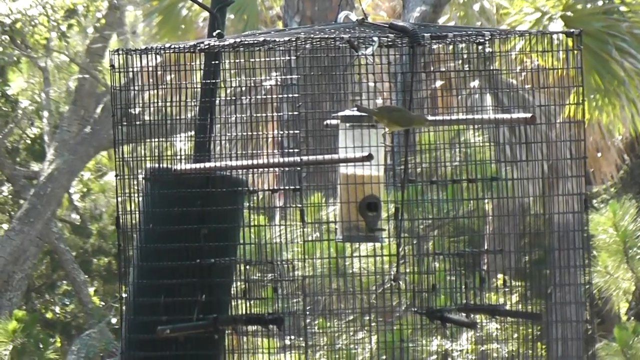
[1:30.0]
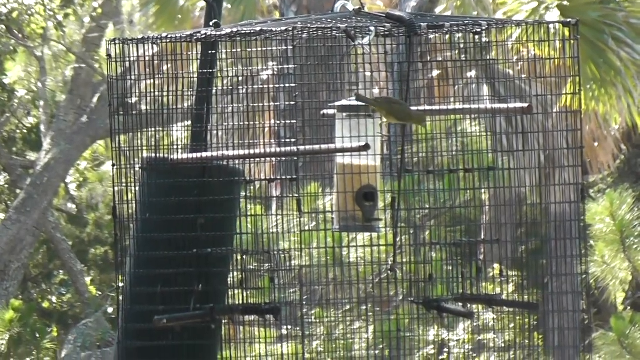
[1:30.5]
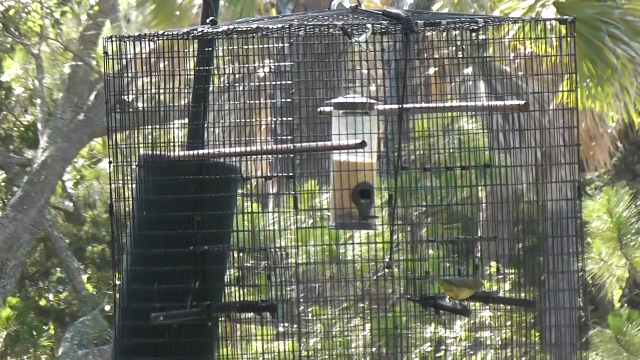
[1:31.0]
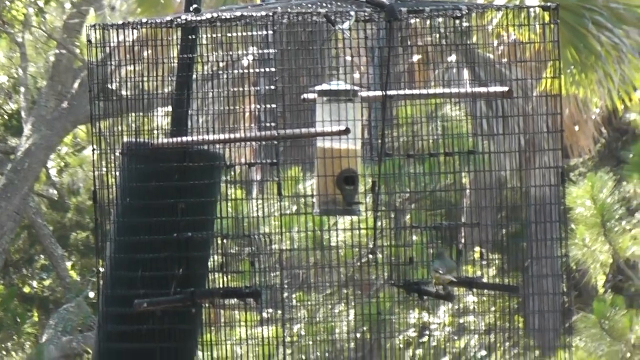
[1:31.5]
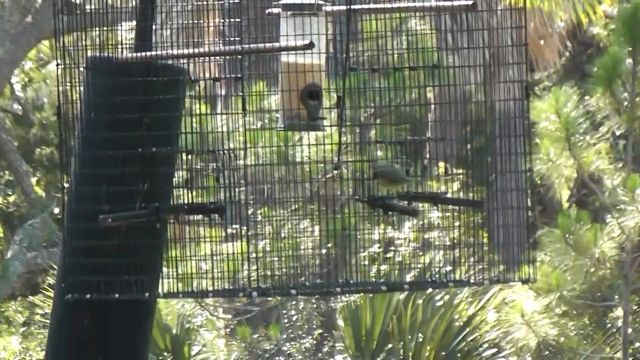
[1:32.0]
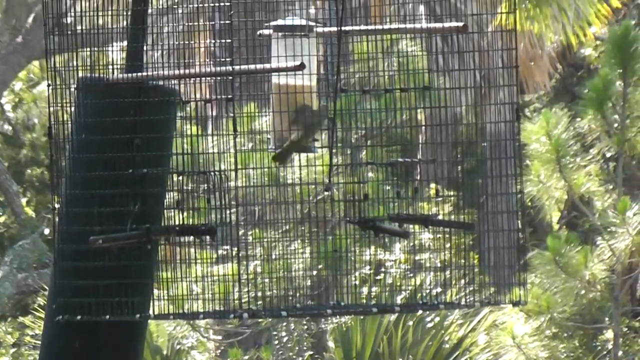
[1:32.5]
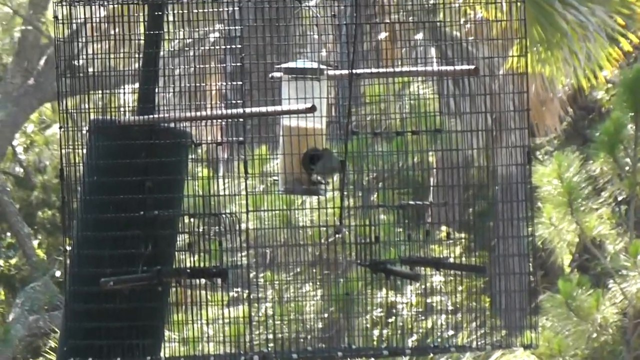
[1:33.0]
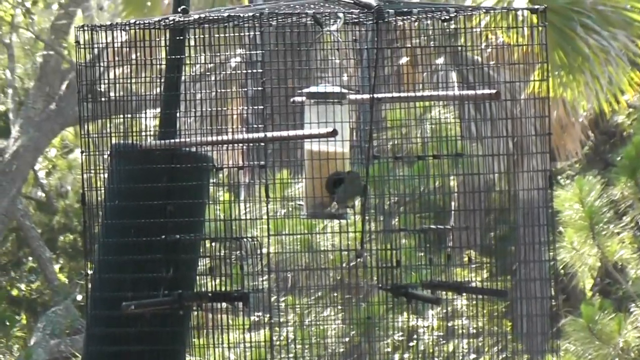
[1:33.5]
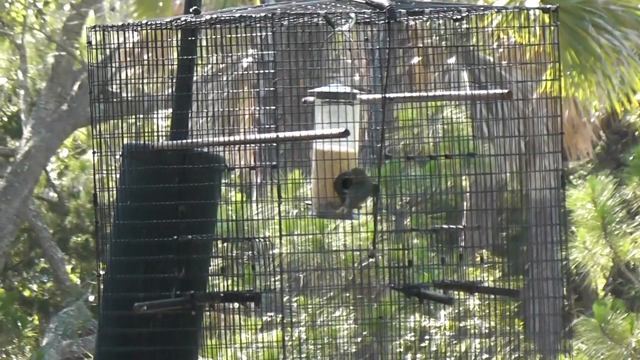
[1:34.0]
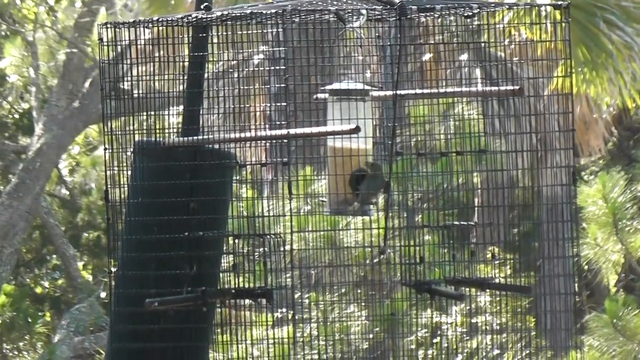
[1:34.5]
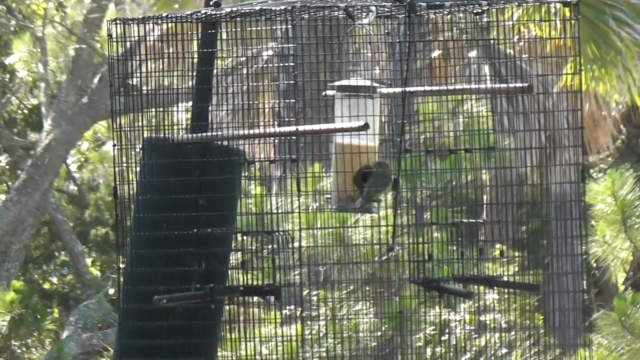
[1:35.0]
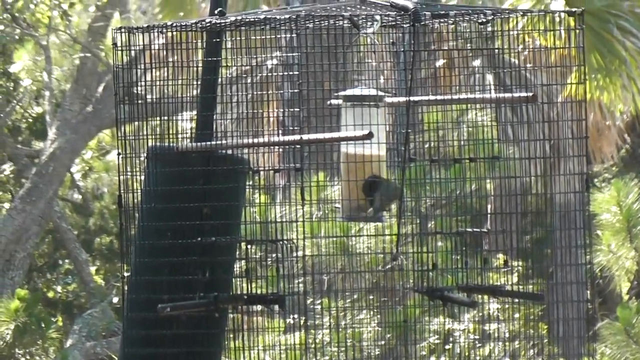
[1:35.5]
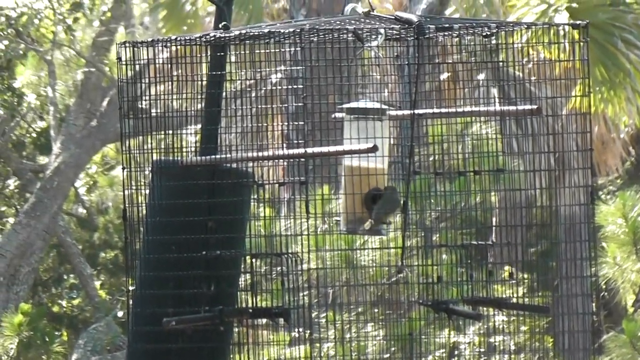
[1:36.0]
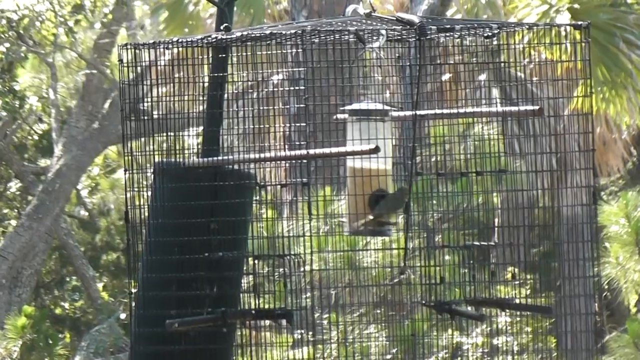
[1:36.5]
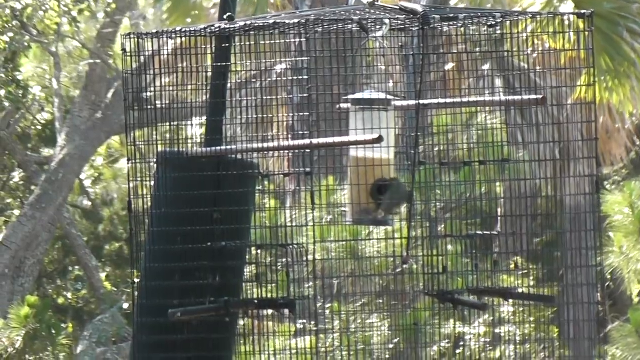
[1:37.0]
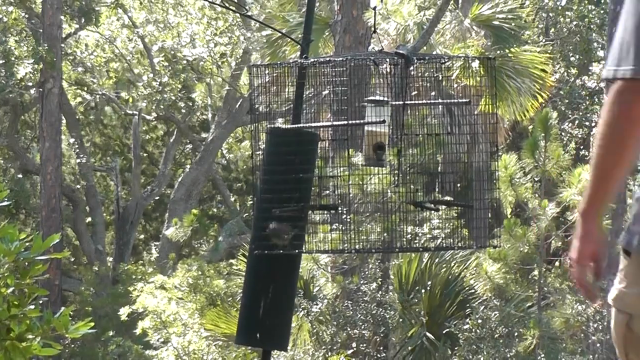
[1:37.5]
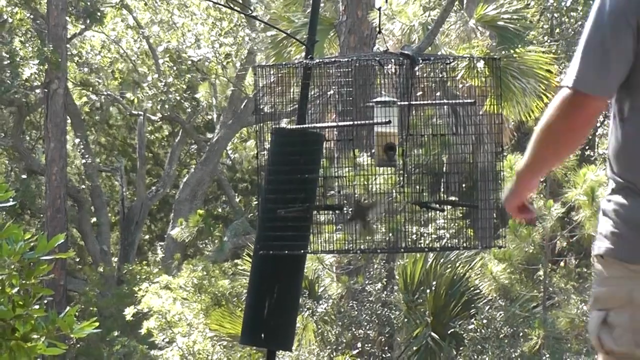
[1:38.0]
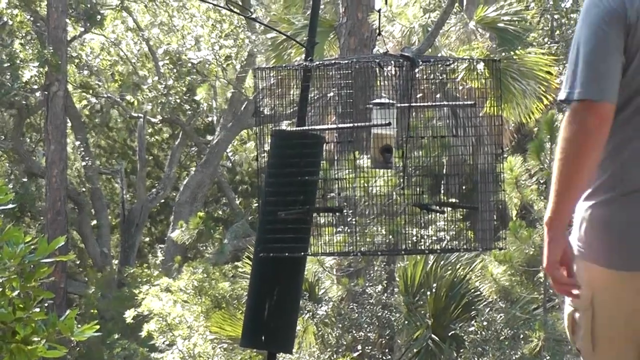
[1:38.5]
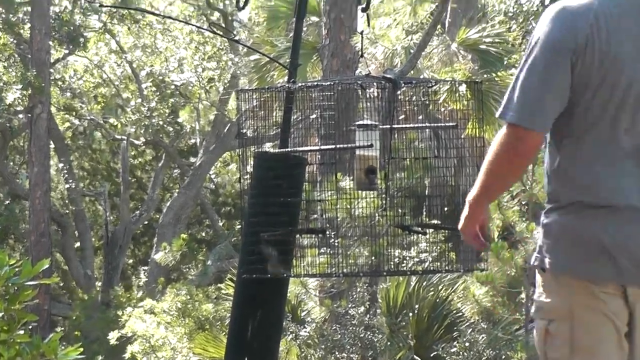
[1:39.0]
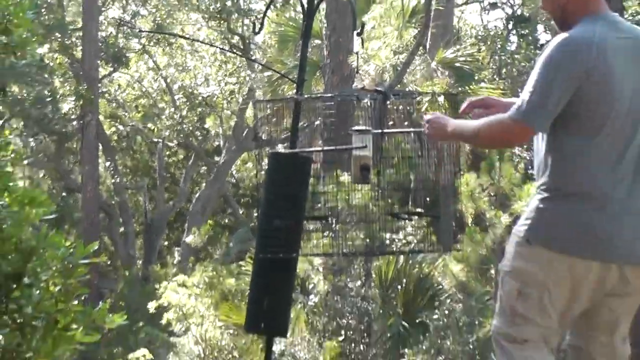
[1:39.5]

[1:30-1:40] In the centre of the screen is a large outdoor bird cage with a seed feeder in it. A green bird is on the outside of the cage and lands on some of the outside perches. It looks as though the bird is trying to get in, but it then feeds from the feeder through a hole in the side of the cage, and the feeder swings slightly. A man in a blue t-shirt walks towards the cage while the bird flaps around the outside of the cage as if trying to get in. The man raises his arms and looks as though he is going to do something to the cage.